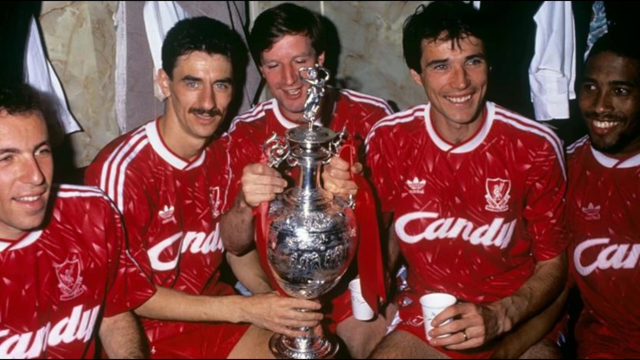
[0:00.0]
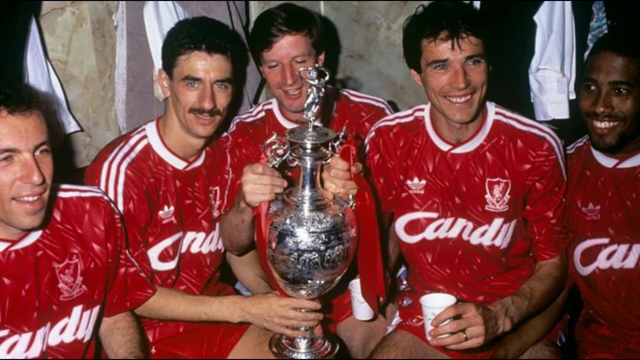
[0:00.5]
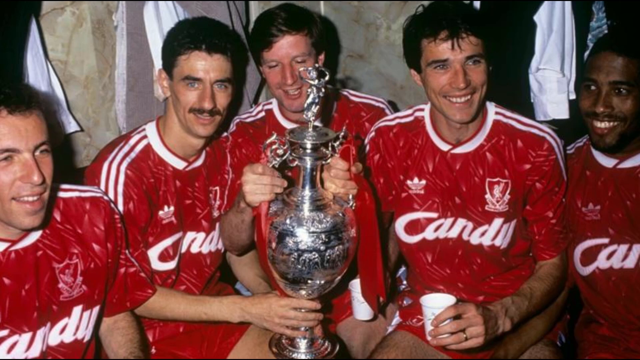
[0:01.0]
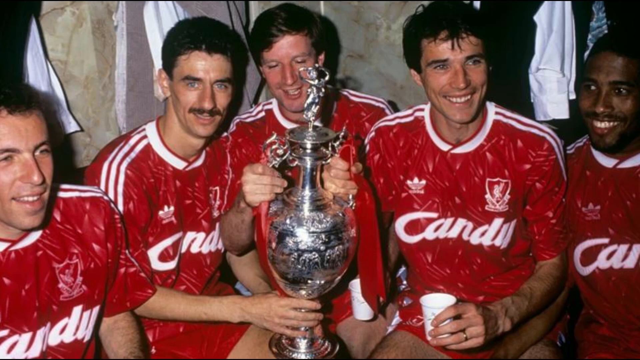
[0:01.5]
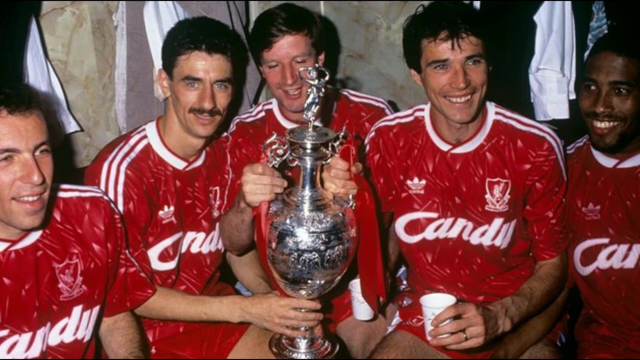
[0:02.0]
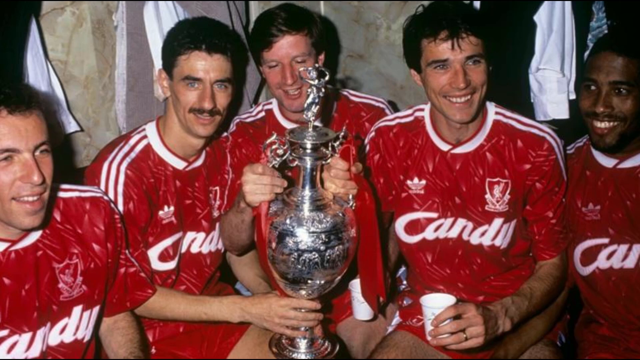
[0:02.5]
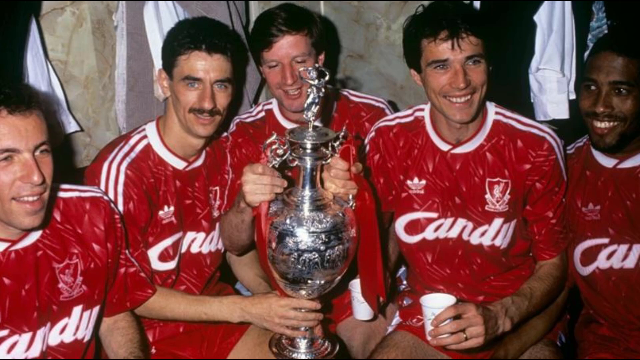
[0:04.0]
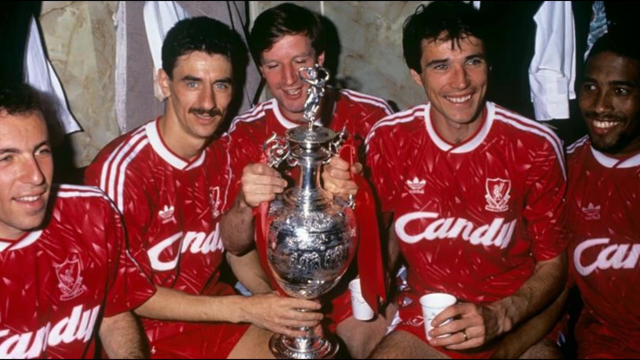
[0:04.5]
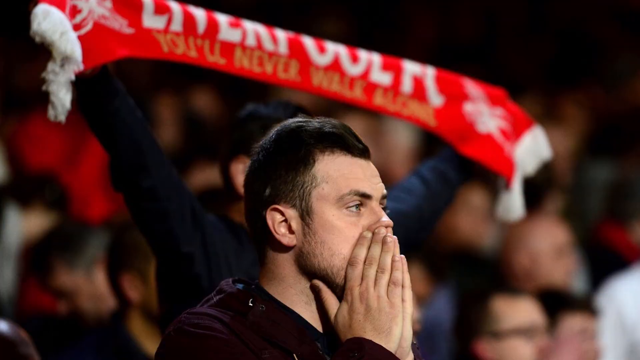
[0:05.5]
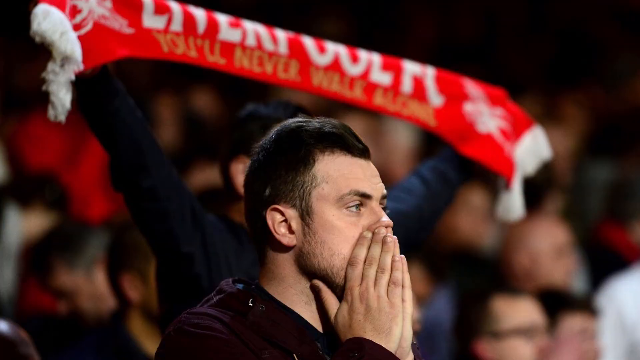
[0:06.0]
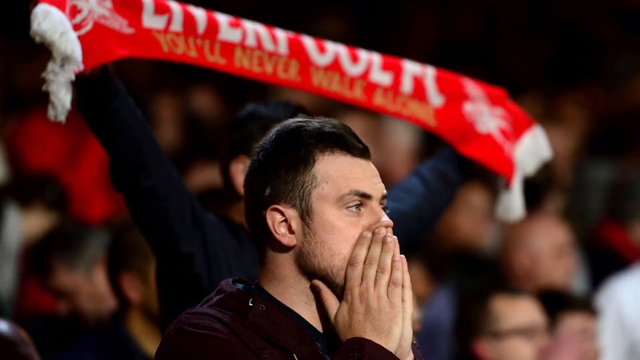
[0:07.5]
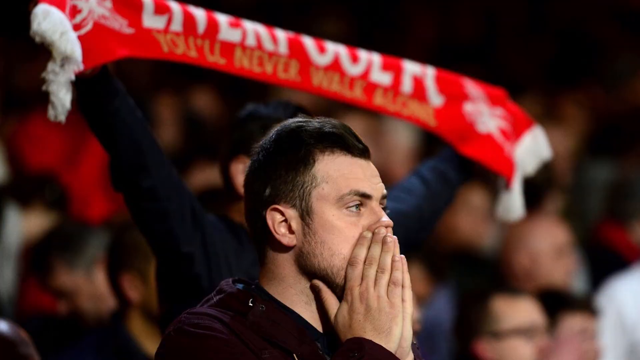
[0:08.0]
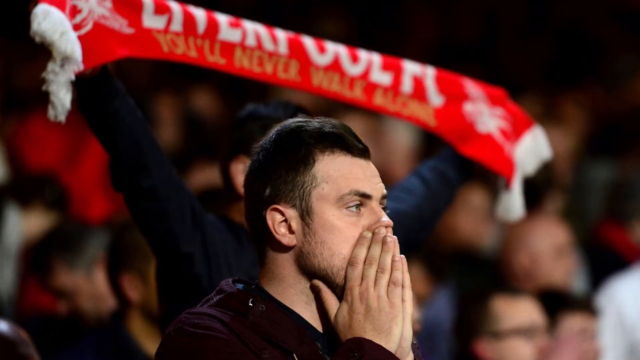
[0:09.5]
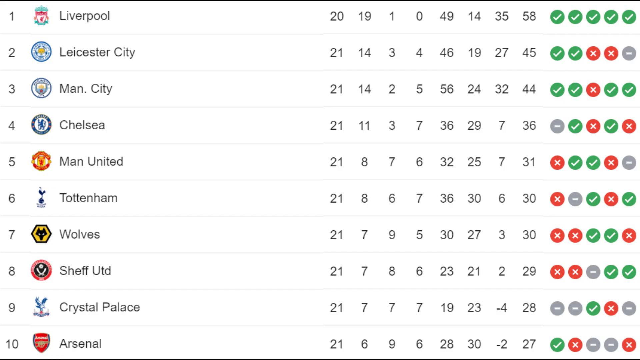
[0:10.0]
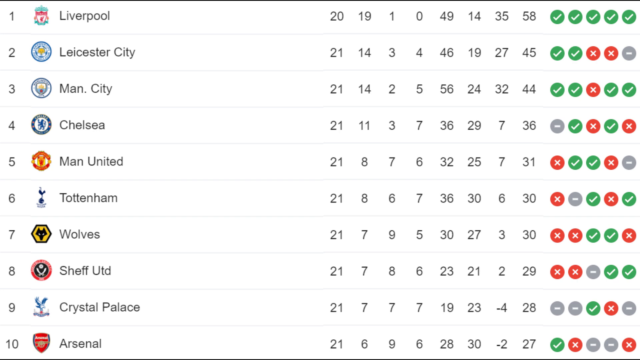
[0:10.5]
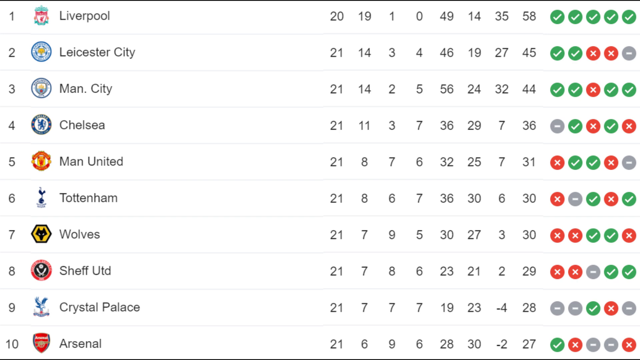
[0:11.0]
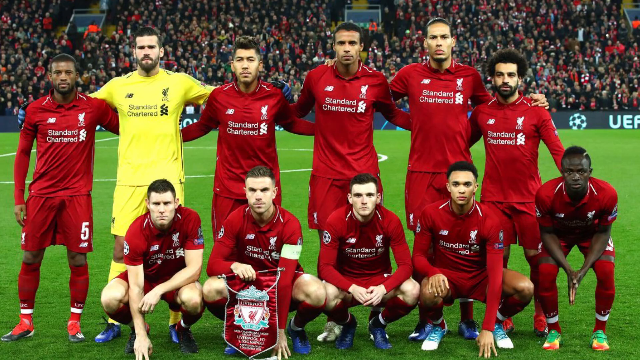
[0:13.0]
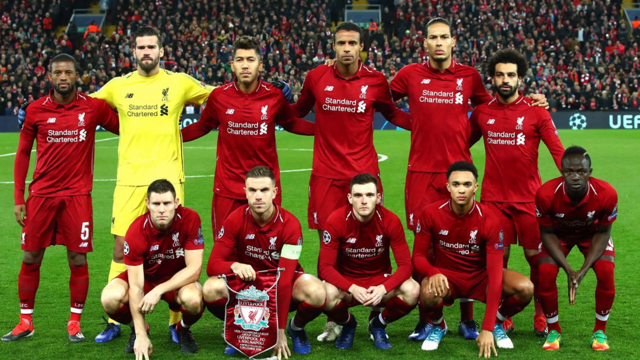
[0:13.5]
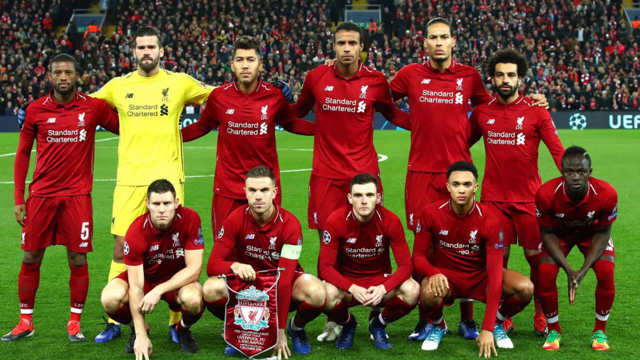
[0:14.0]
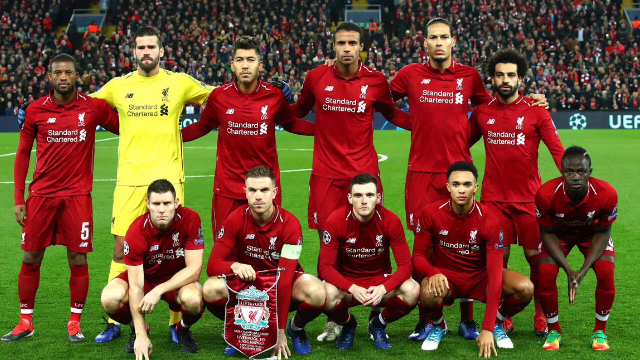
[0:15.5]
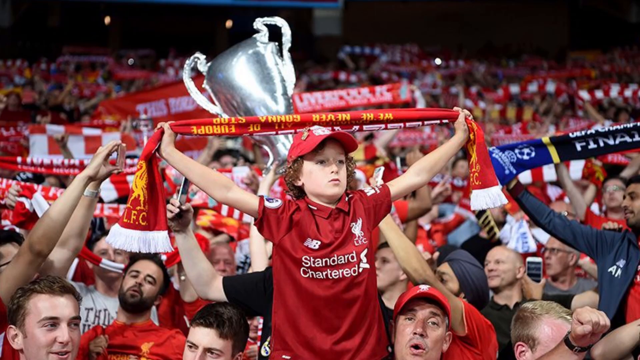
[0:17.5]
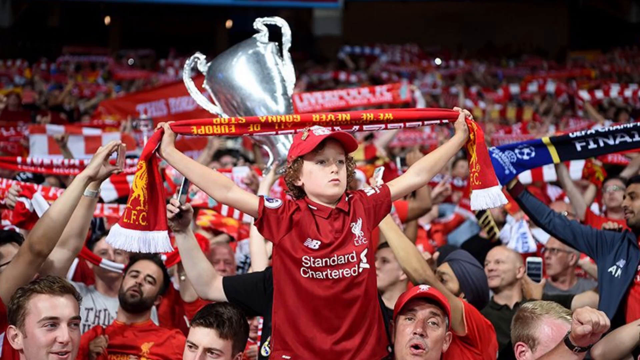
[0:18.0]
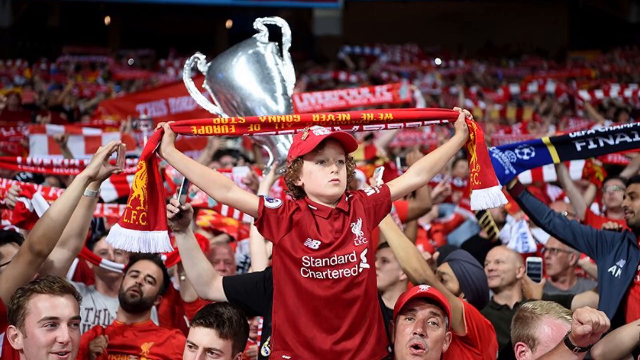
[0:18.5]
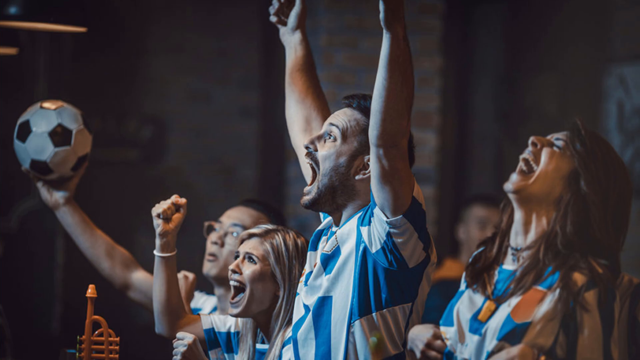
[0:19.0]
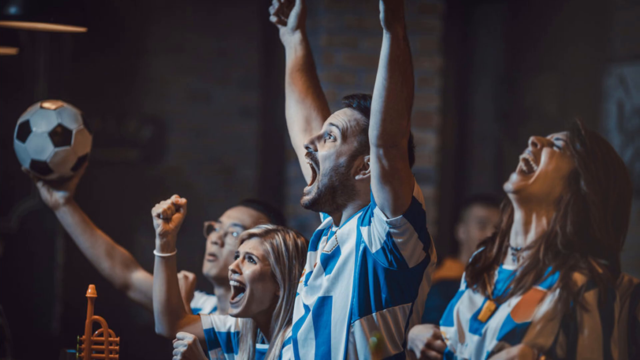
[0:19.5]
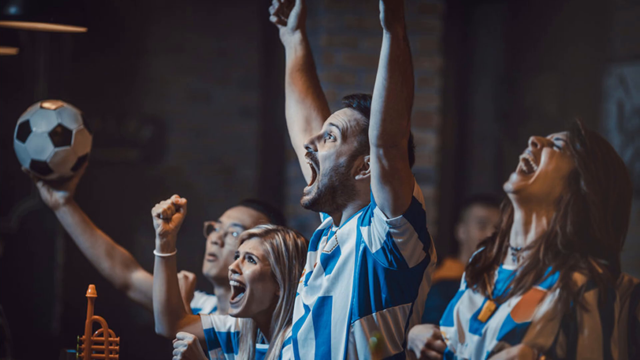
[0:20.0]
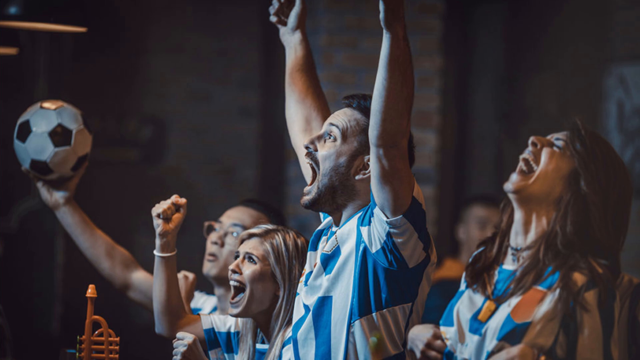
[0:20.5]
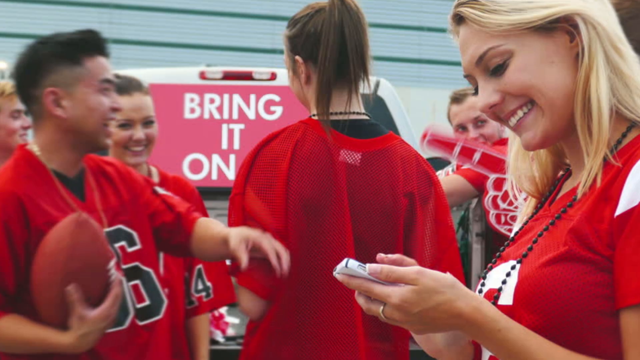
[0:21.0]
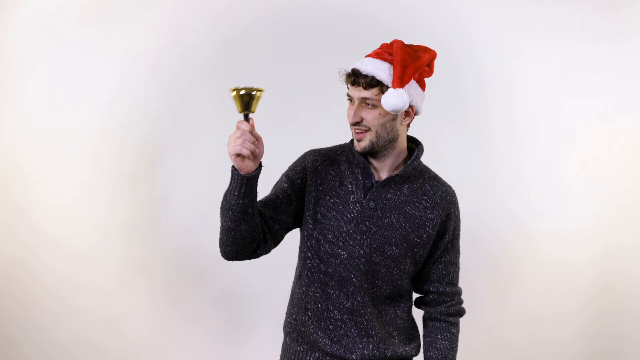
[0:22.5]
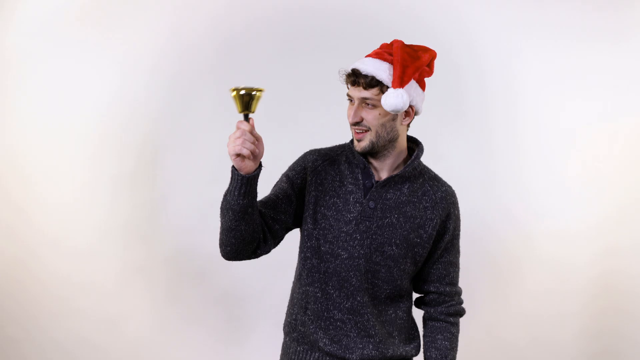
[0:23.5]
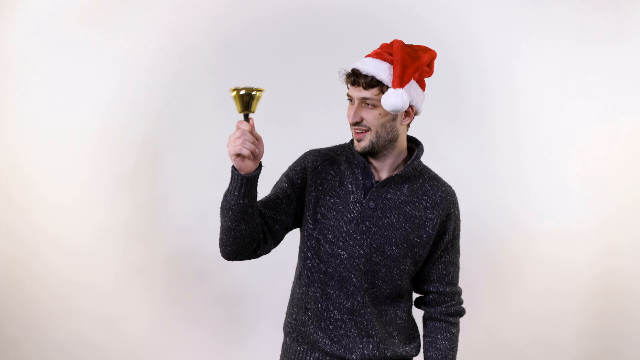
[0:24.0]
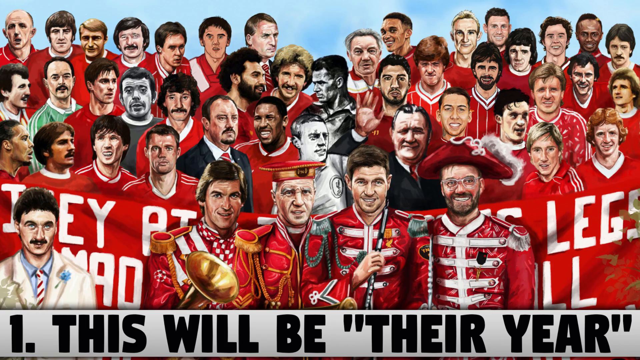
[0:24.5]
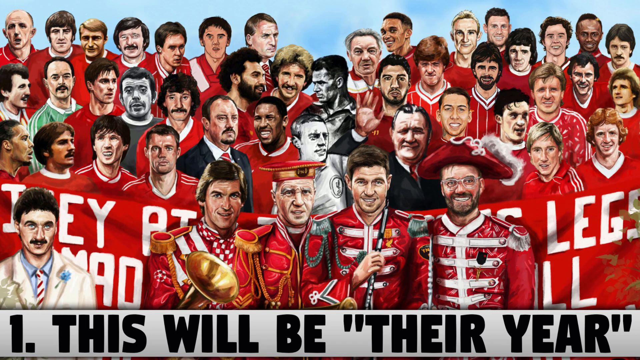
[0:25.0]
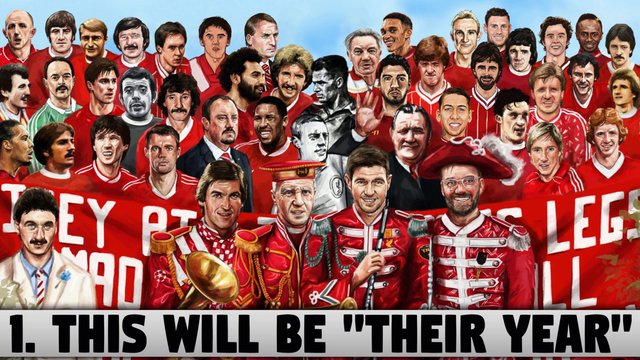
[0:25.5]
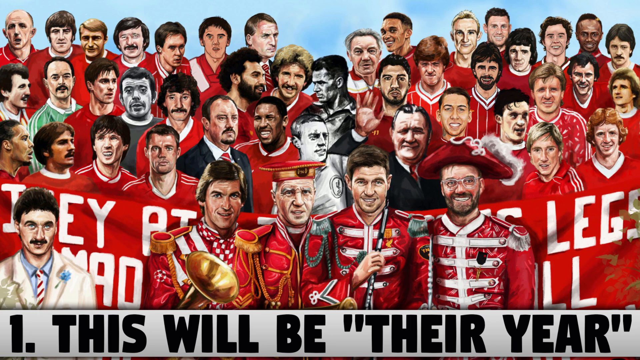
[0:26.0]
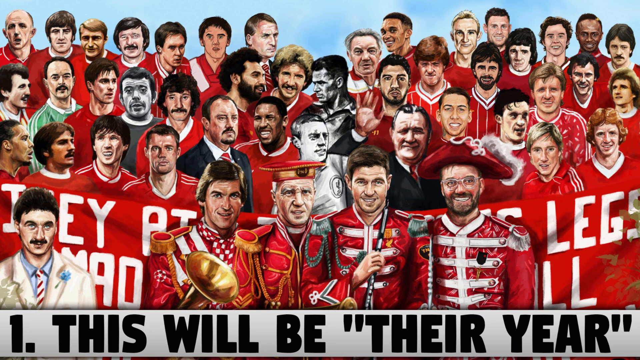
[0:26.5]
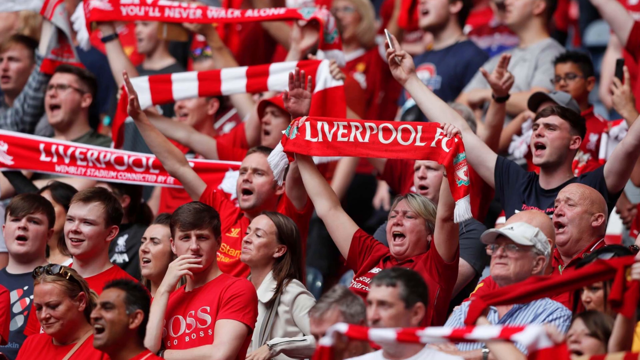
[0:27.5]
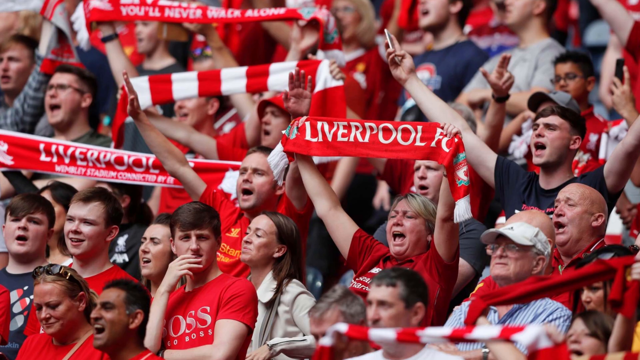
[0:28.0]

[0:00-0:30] At the beginning, five men who appear to be soccer players are shown, all wearing red jerseys with white stripes on the shoulders and some white text on the chest. The middle player, the third one, holds a silver trophy in his hand, and the player next to him on the left has his right hand on the bottom of the trophy. All the players are smiling. The scene changes to what appear to be spectator stands. In the foreground is a Caucasian man with dark hair, dark eyebrows, light eyes and a five o'clock shadow type of beard, holding both hands in kind of a prayer formation under his nose and over his mouth. Right behind him, a person in a black top holds some kind of red banner. The scene then changes to a list of what appear to be teams with stats; from top to bottom the teams include Liverpool, Leicester City, Man City, Chelsea, Man United, Tottenham, and so on.